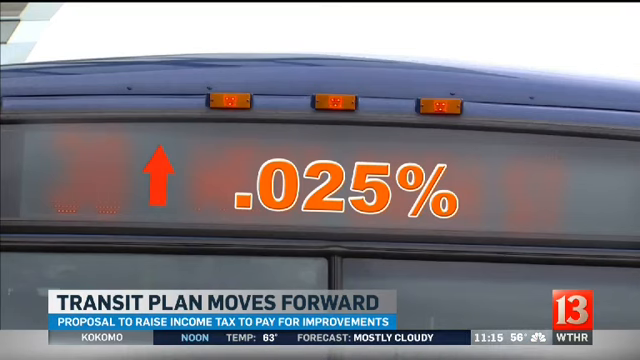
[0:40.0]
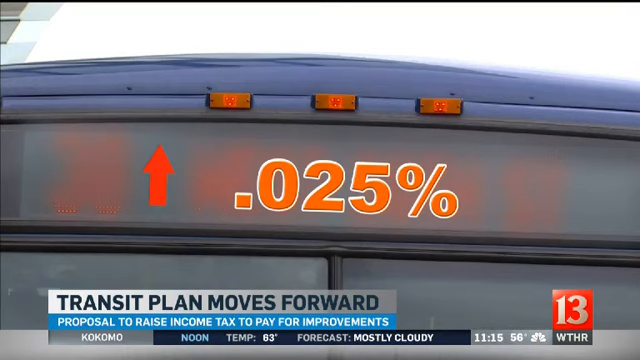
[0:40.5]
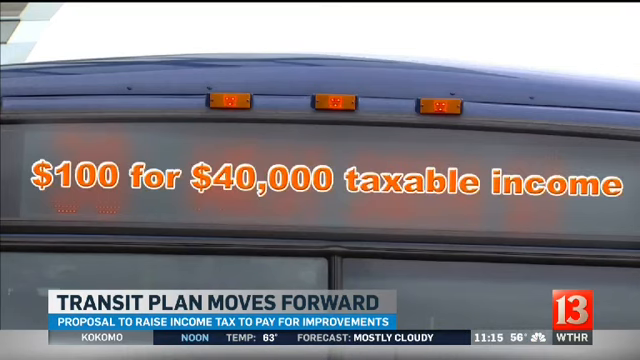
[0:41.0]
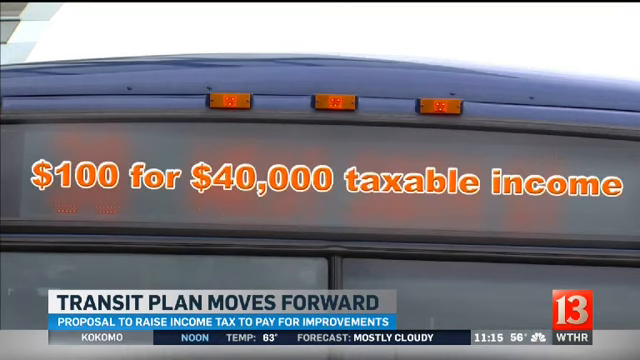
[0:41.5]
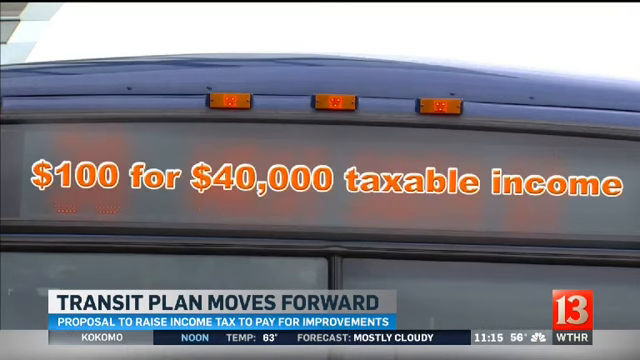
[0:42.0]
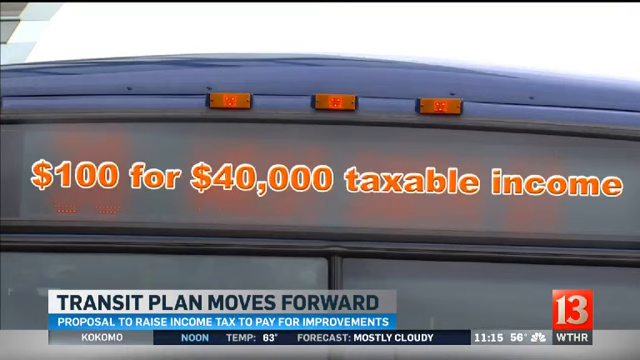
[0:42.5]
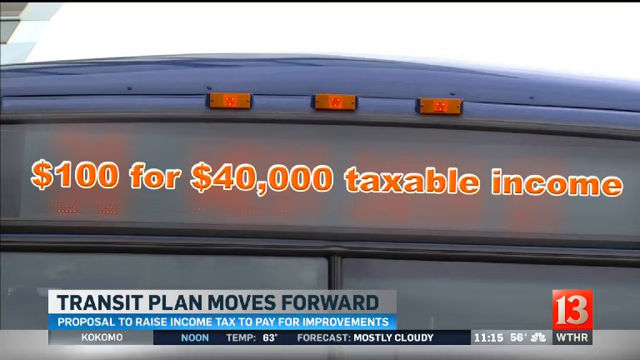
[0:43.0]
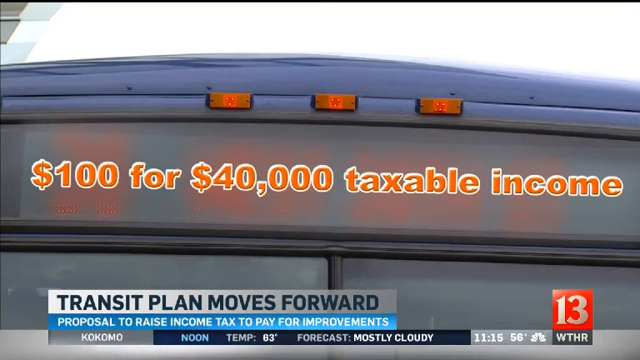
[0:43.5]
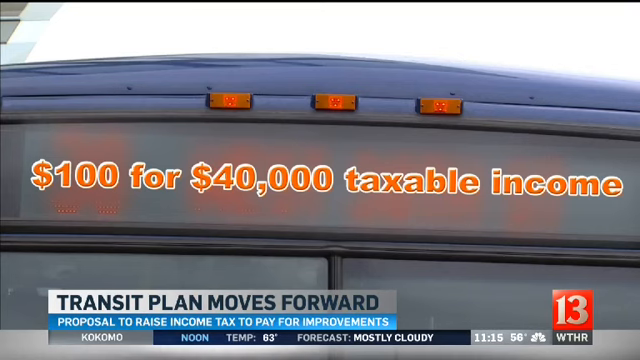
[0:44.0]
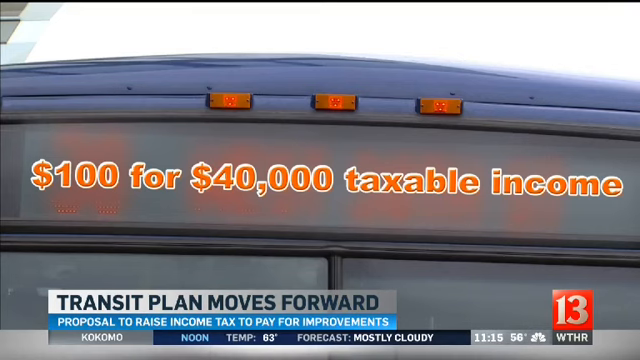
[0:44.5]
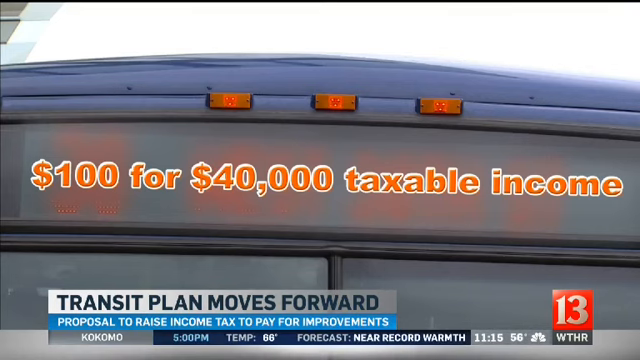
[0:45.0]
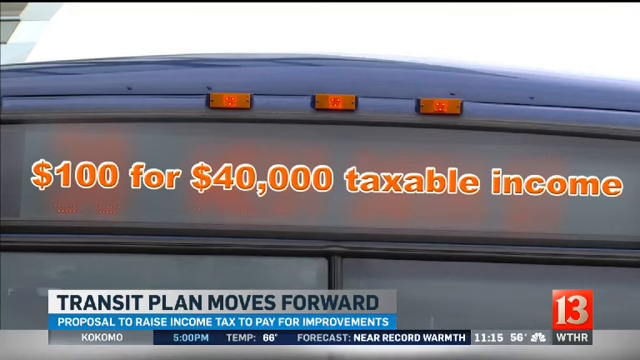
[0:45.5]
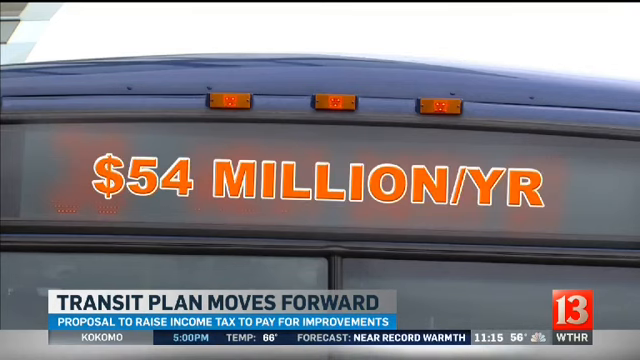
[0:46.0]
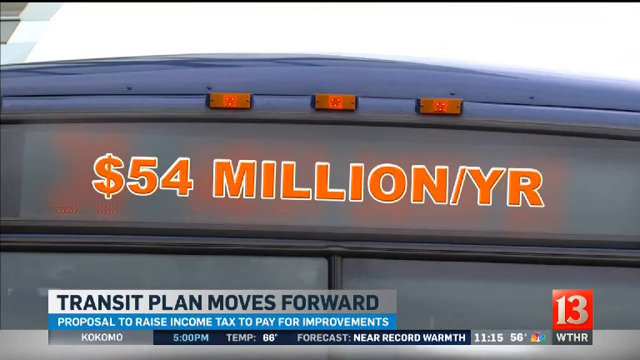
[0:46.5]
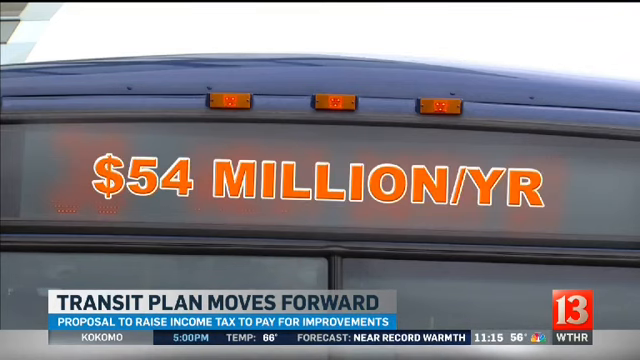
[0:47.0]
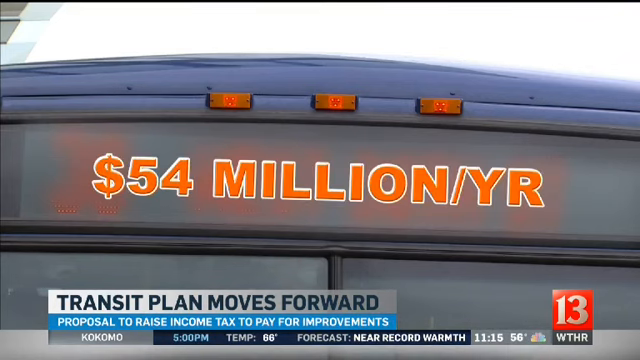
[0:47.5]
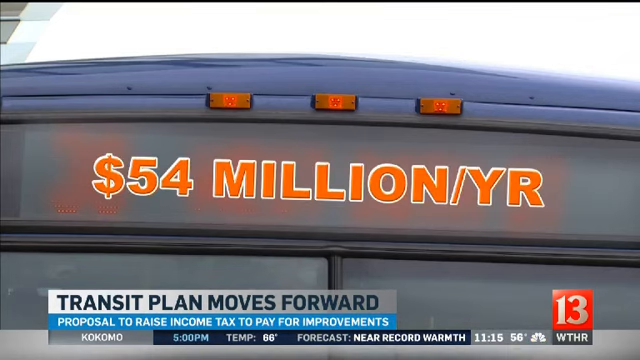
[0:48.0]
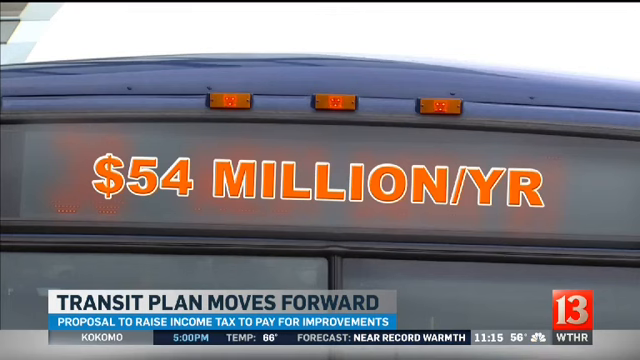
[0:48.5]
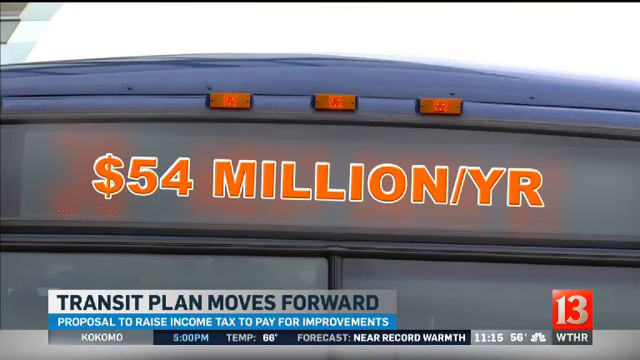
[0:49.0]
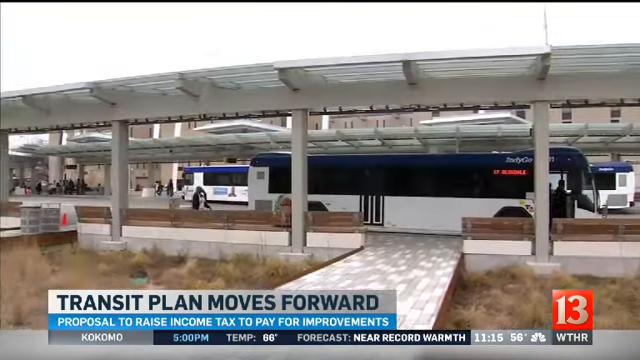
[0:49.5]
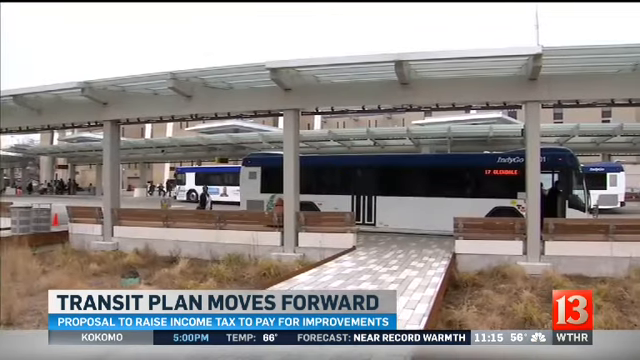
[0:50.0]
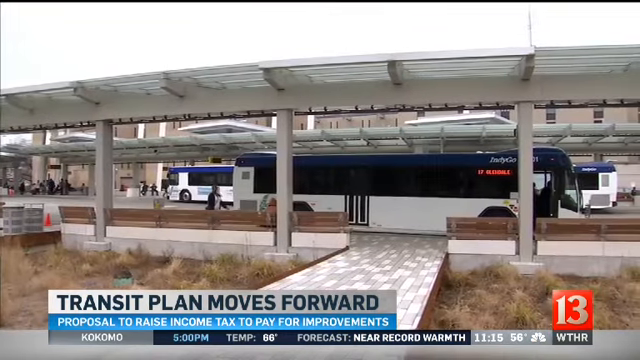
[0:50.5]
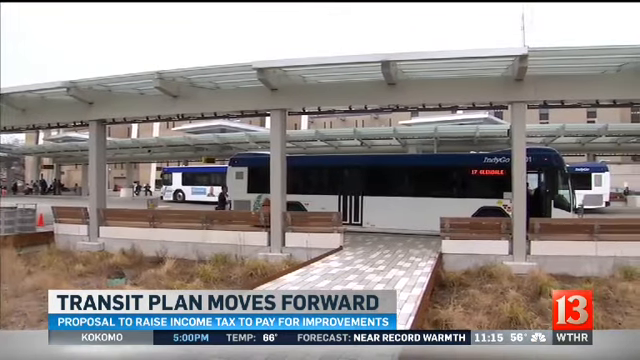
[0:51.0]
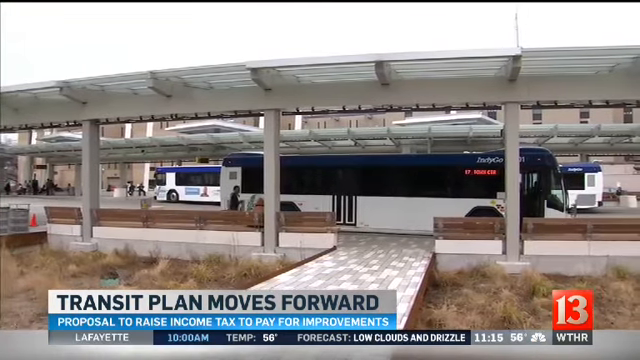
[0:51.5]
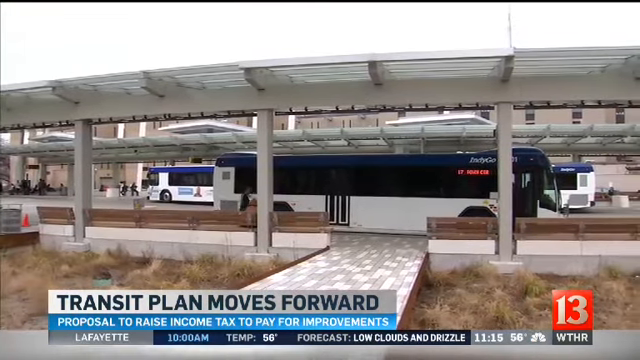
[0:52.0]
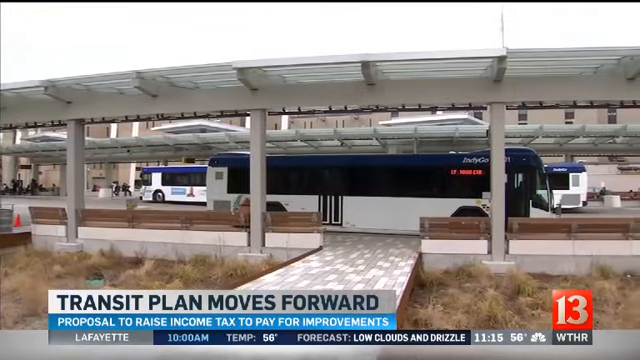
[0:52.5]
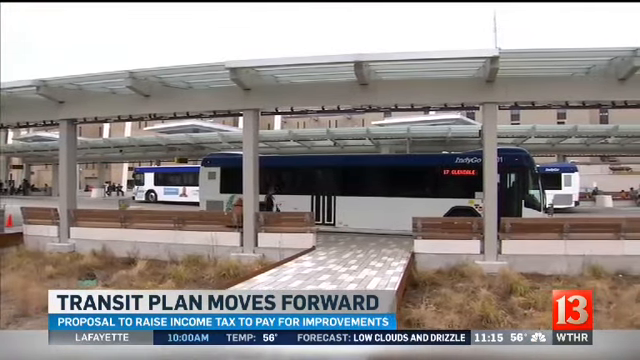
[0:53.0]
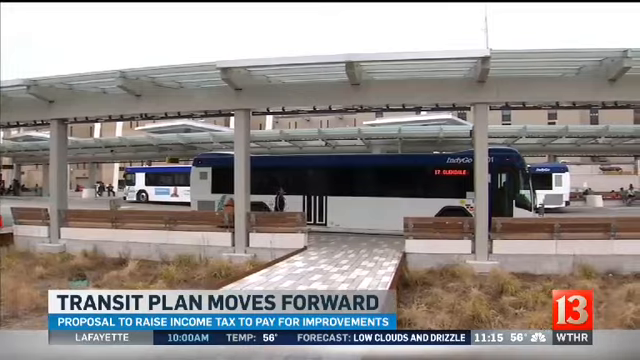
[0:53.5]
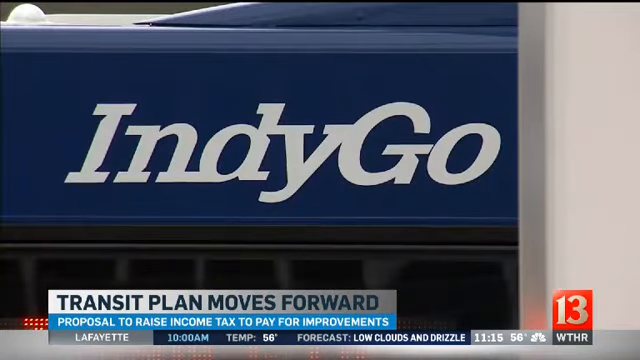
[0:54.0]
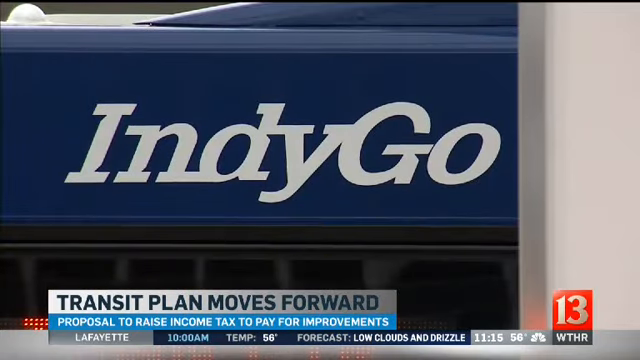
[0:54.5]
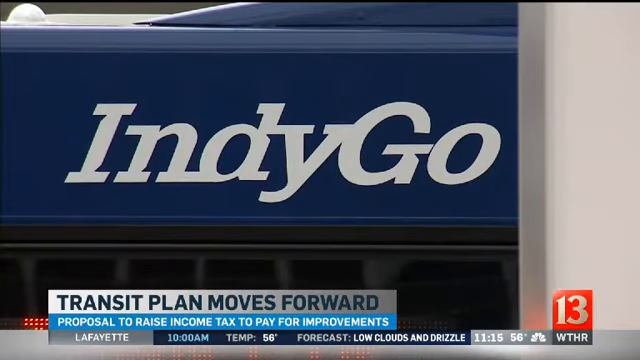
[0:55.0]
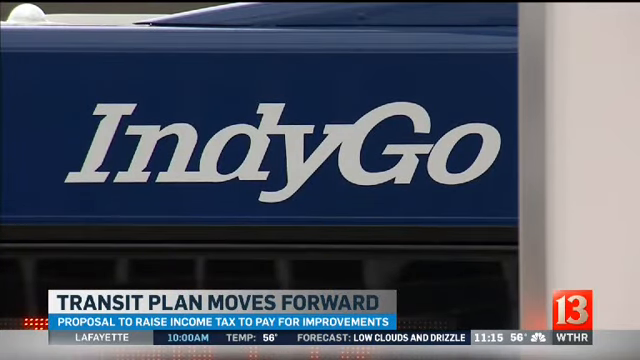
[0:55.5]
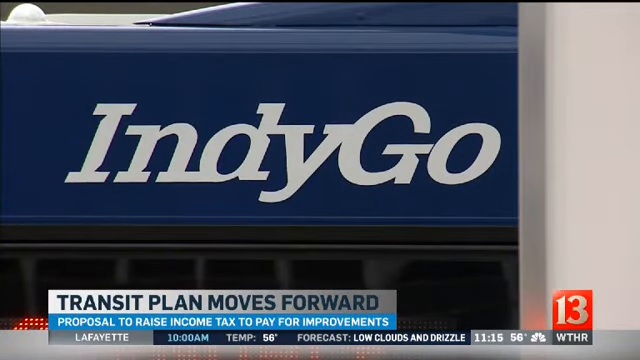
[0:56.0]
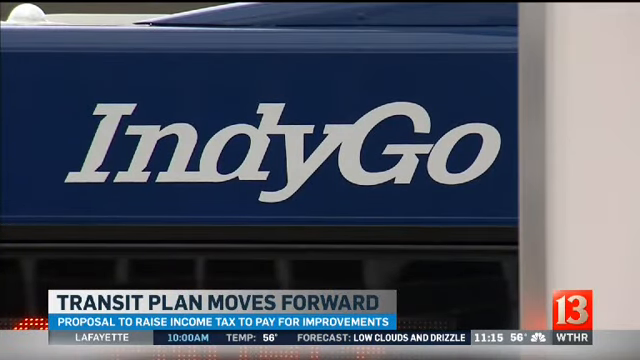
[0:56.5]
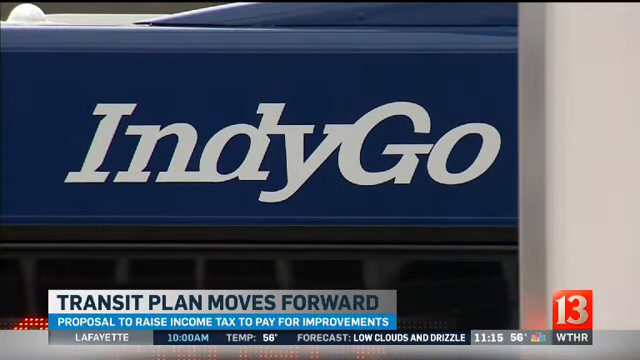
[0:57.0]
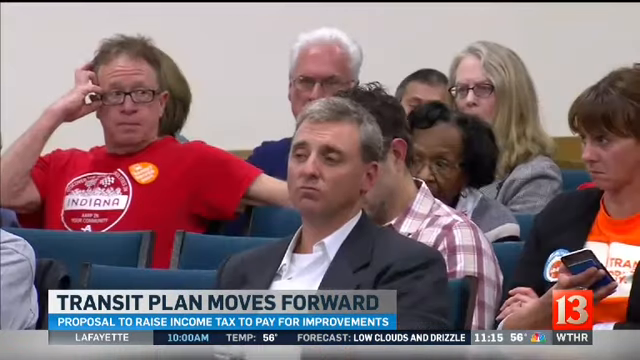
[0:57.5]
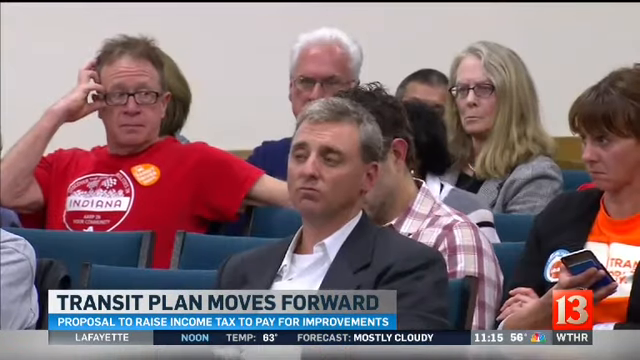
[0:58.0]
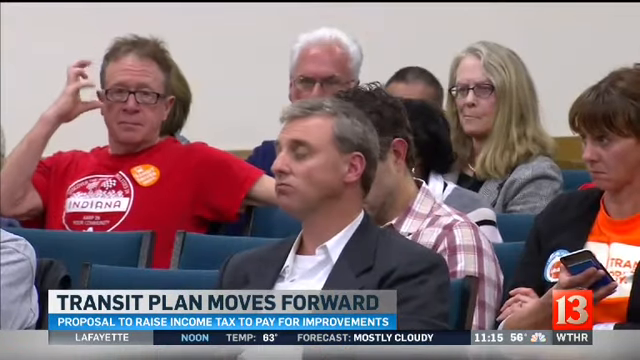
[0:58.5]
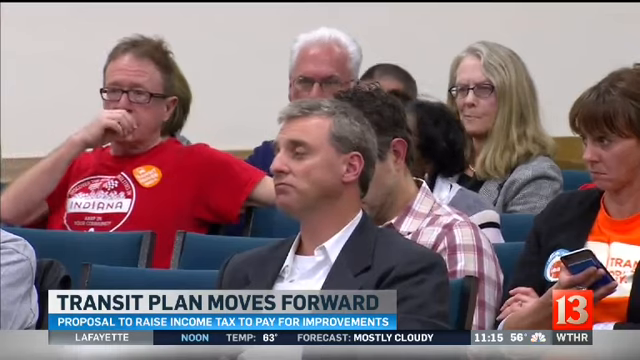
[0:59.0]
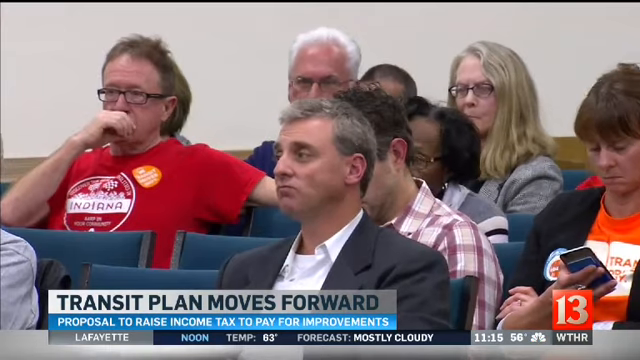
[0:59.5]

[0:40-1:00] Numbers say "13". The image is unclear; it almost looks like the back of a car or a window. A red arrow pointing up is superimposed over it, with "0.025%" in big orange letters, and a white box underneath says "transit plan moves forward", with "proposal to raise income tax to pay for improvements" below that. Orange text over the image then says "100 for 40,000 taxable income", and then changes to "54 million/YR". Next is a view of a bus at what looks like a bus station, with somebody going forward. Footage follows of a large building with navy blue and large white writing that says "Indygo". A group of people is at what looks like some kind of meeting; they all look frustrated, and lots of different people are sitting in chairs.